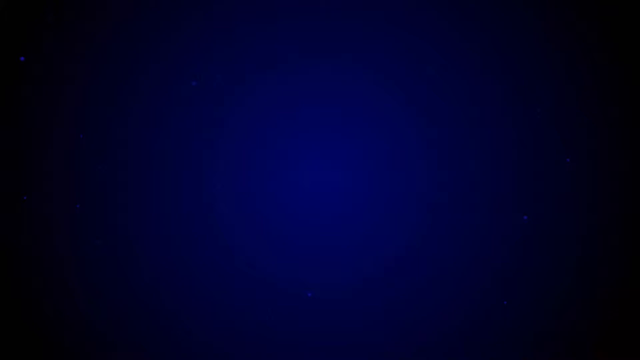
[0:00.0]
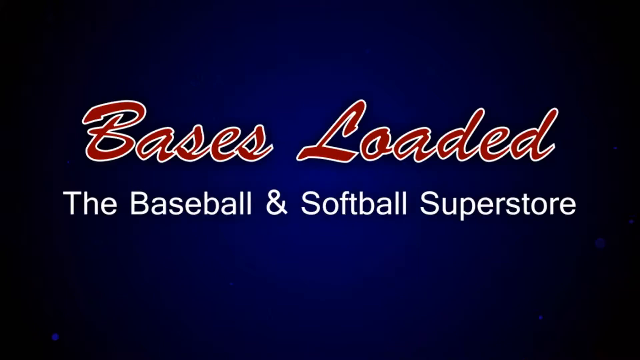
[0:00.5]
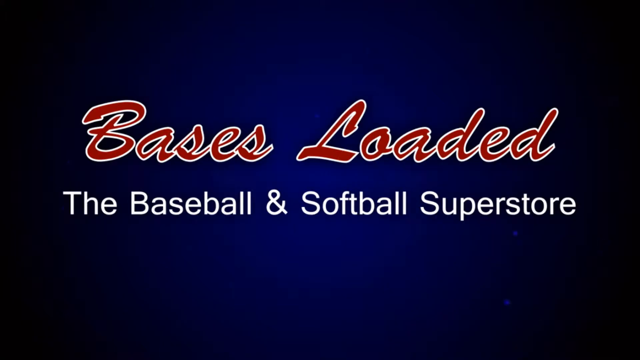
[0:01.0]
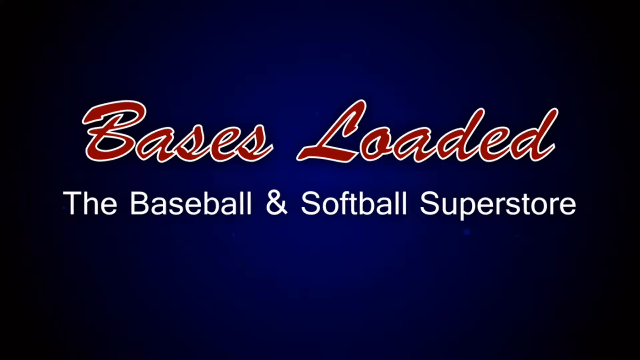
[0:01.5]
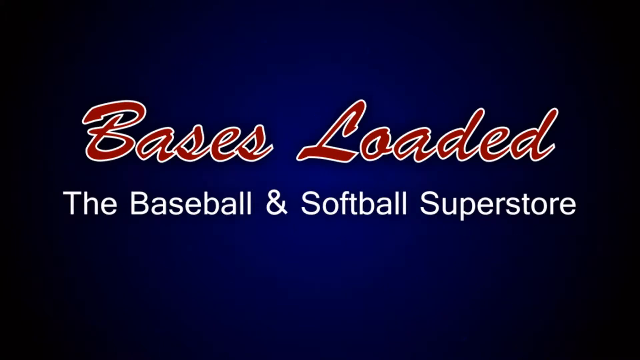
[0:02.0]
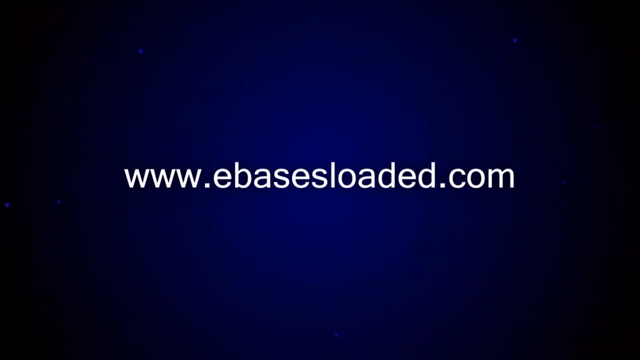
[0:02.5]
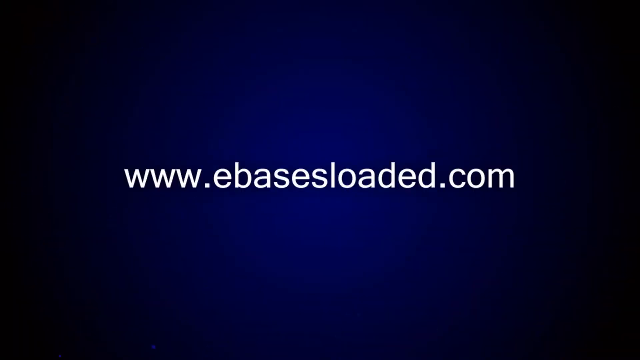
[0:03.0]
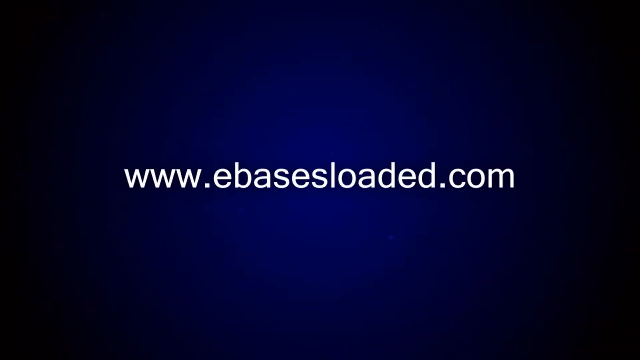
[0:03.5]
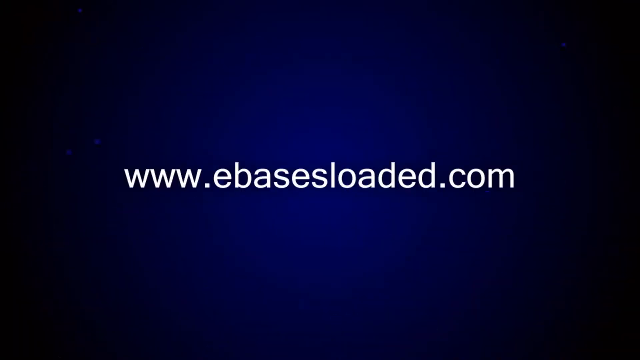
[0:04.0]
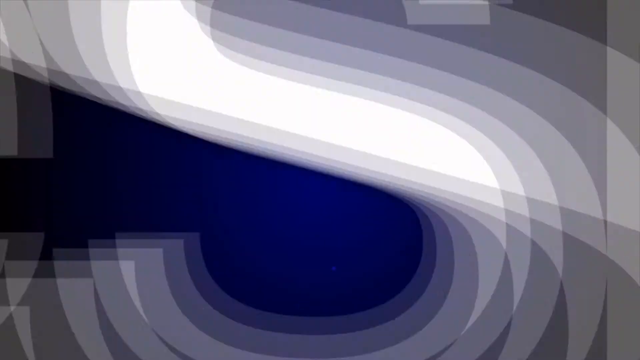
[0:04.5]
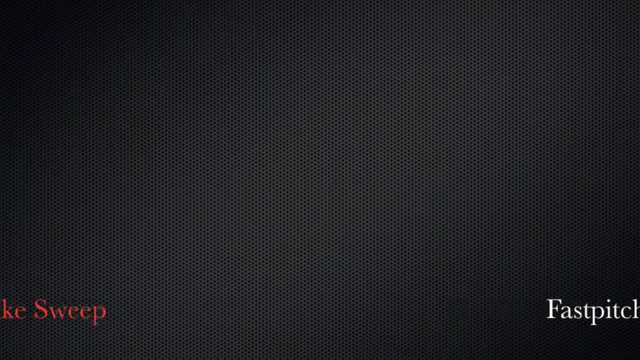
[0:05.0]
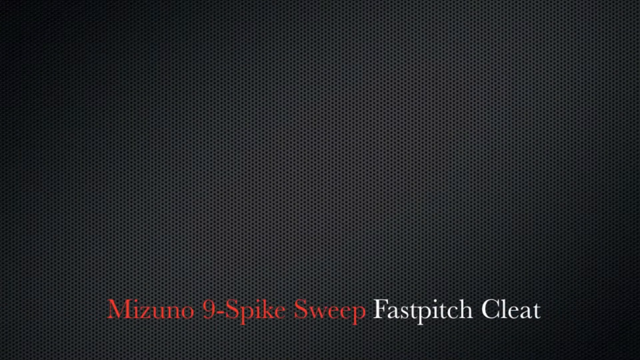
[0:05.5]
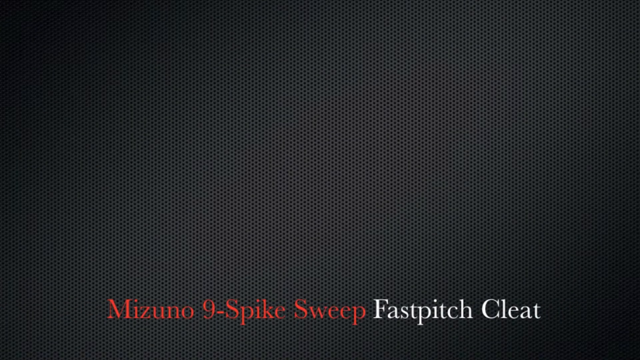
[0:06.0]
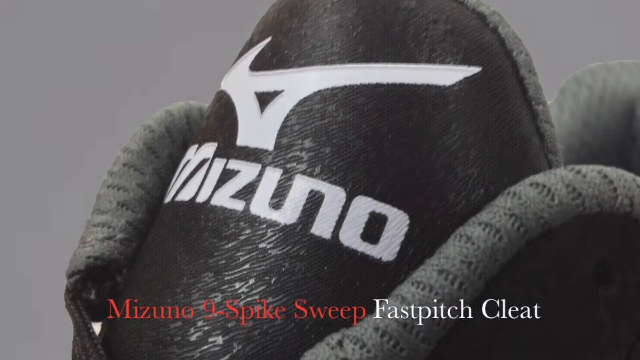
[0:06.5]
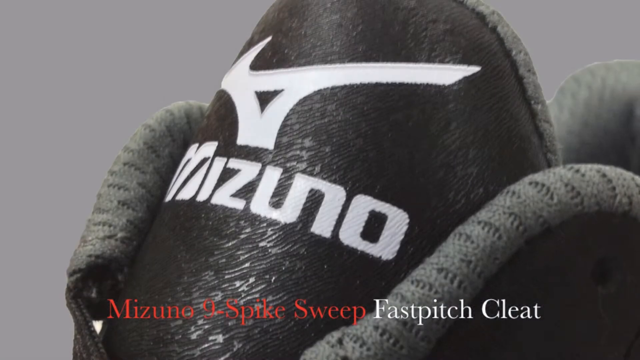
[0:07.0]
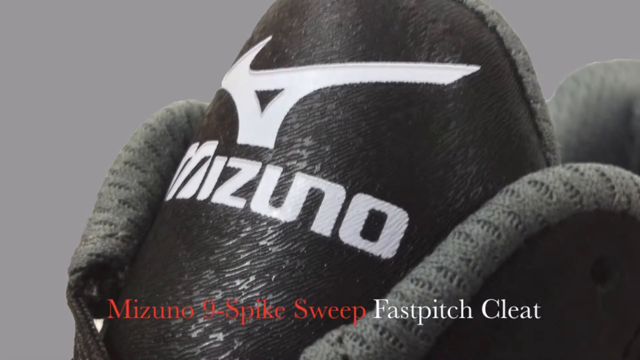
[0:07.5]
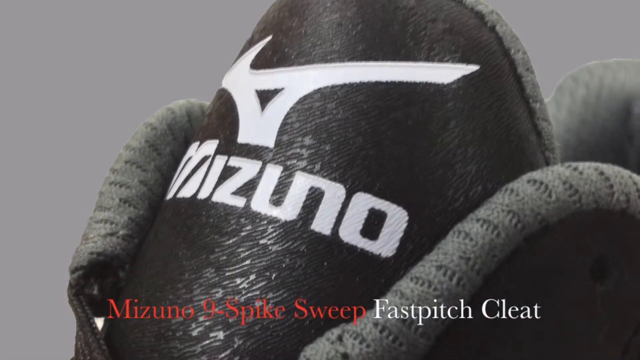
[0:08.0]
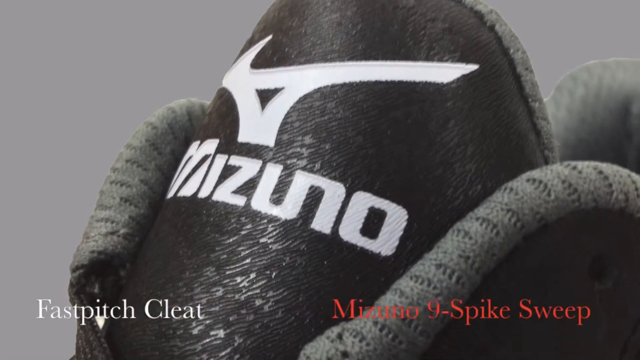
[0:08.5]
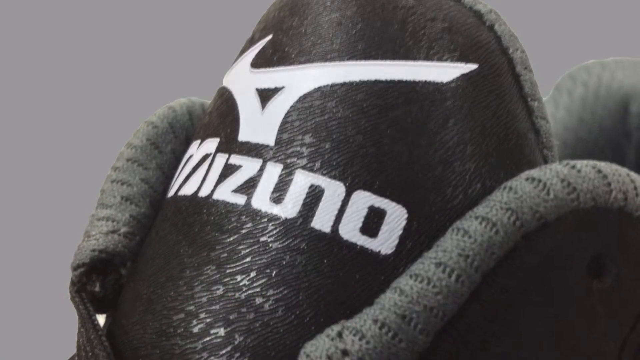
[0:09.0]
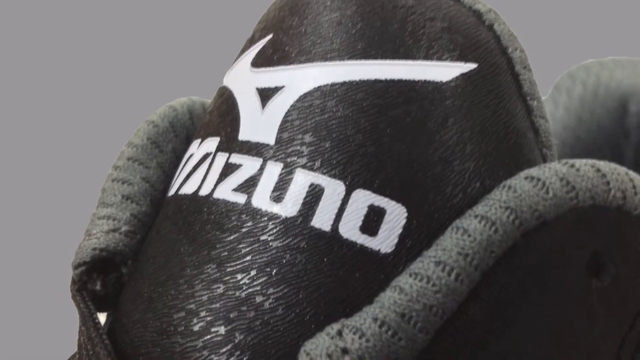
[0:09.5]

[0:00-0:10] The video appears to be a commercial for Bases Loaded. The logo reads "Bases Loaded" in red with a white outline on a big blue background, and underneath it, in white letters, it says "the baseball and softball superstore". The next slide says "www.eBasesLoaded.com". Once those graphics go away, products start to appear. The first one shown is a Mizuno 9-Spike Sweep Fast Pitch Cleat, apparently a softball cleat, and a picture of a cleat comes up.